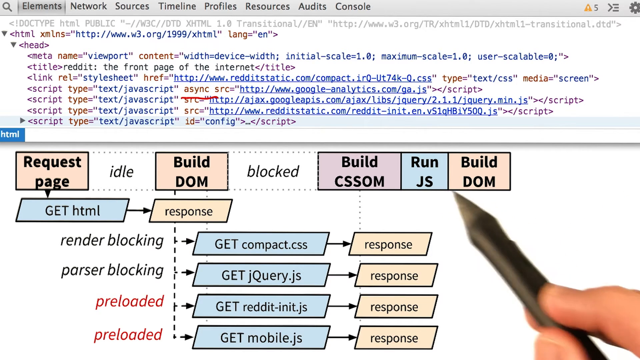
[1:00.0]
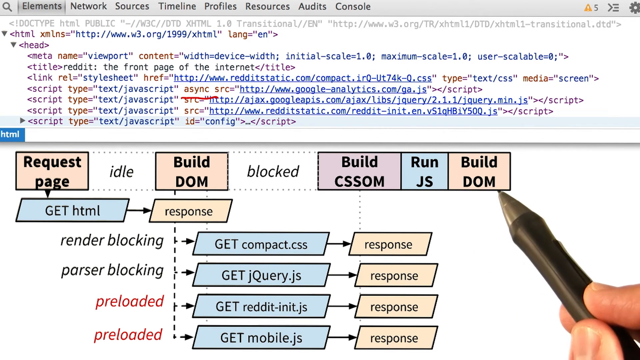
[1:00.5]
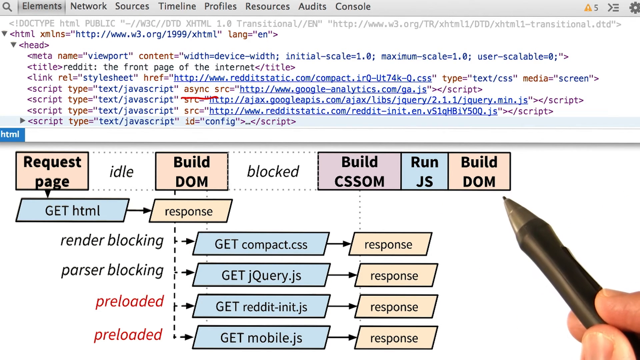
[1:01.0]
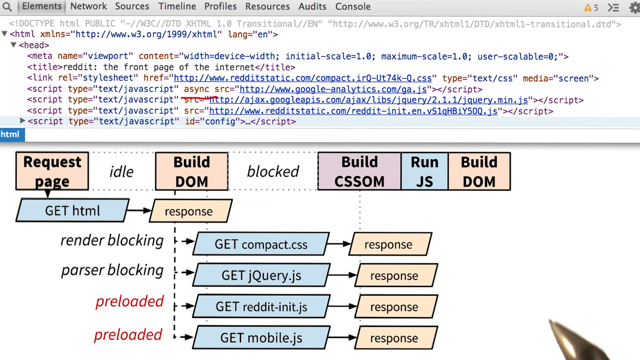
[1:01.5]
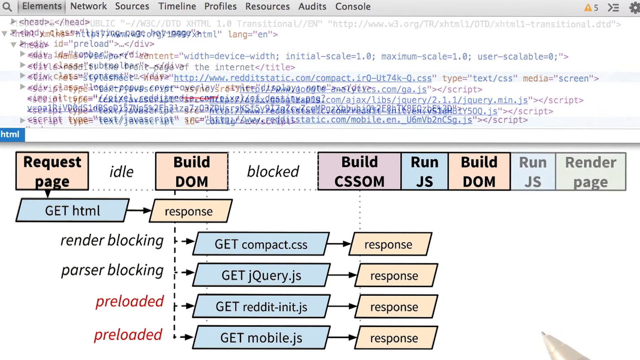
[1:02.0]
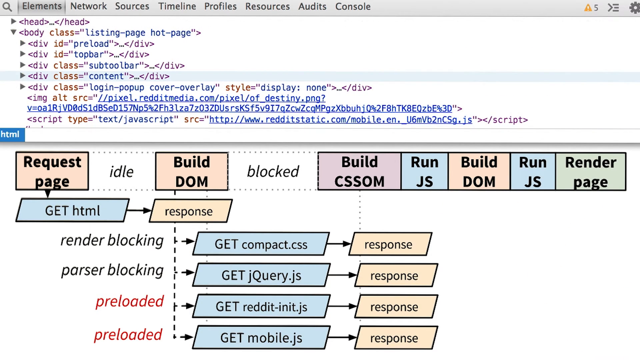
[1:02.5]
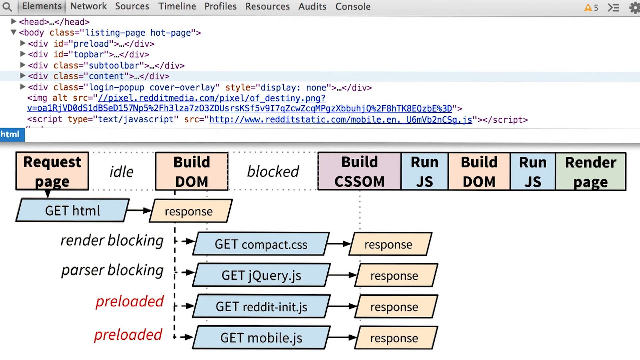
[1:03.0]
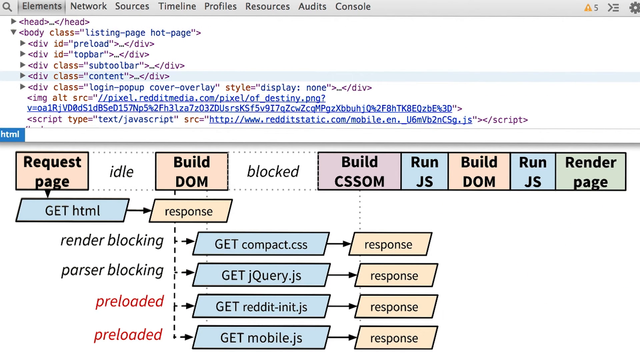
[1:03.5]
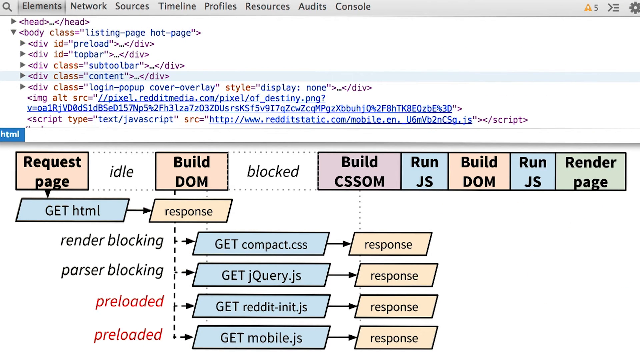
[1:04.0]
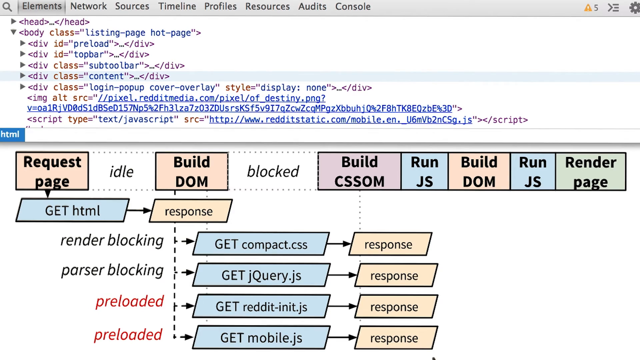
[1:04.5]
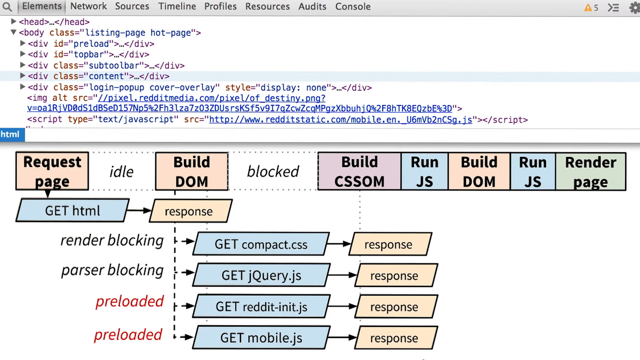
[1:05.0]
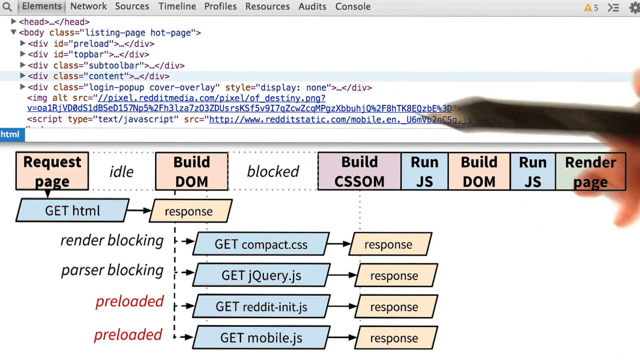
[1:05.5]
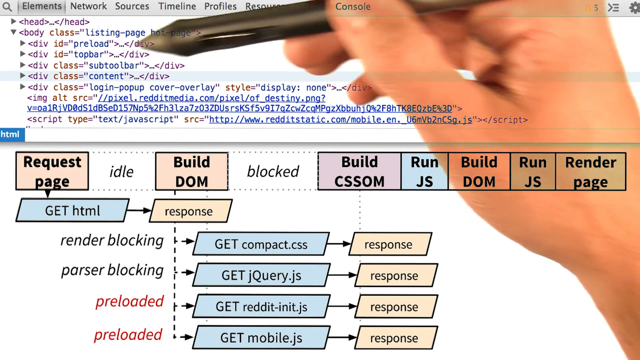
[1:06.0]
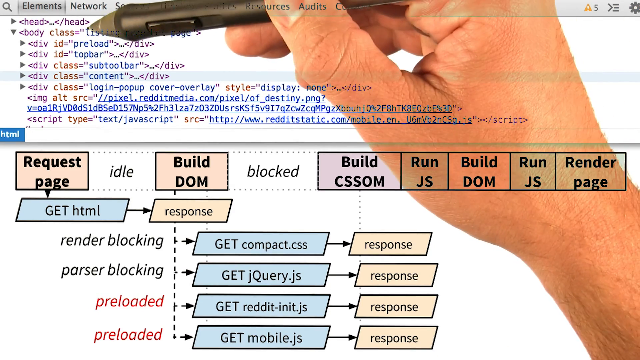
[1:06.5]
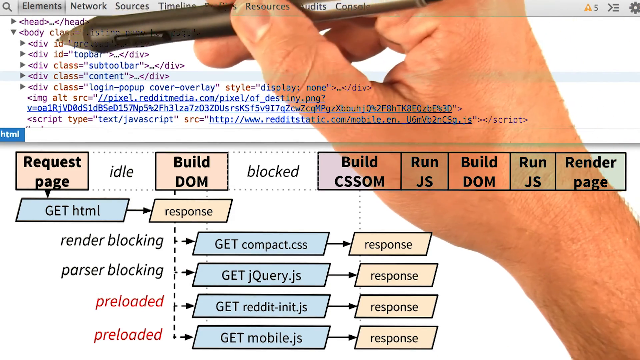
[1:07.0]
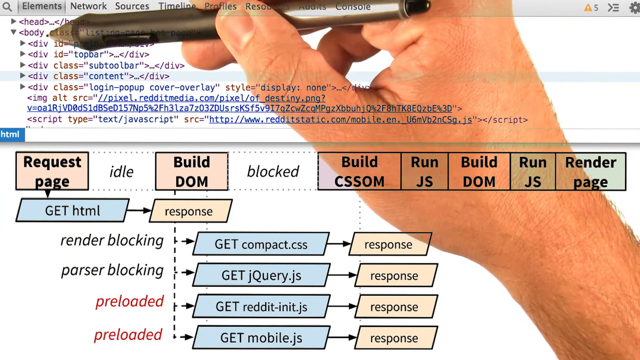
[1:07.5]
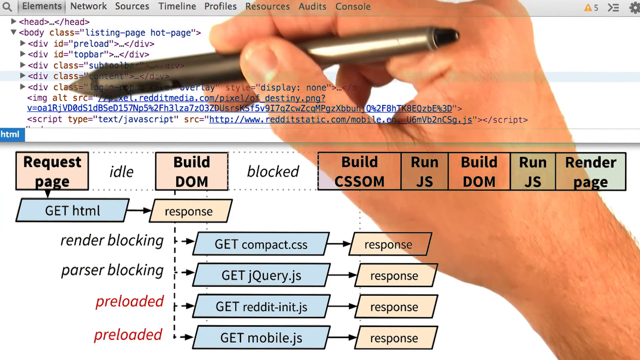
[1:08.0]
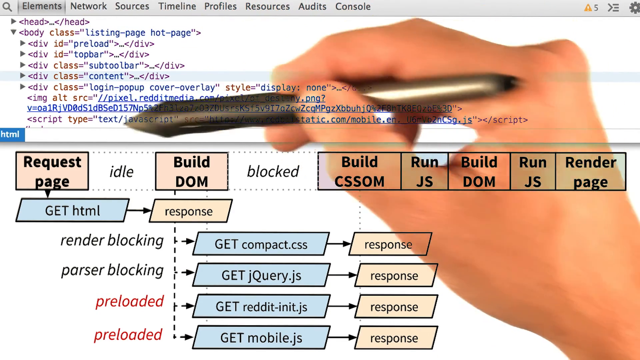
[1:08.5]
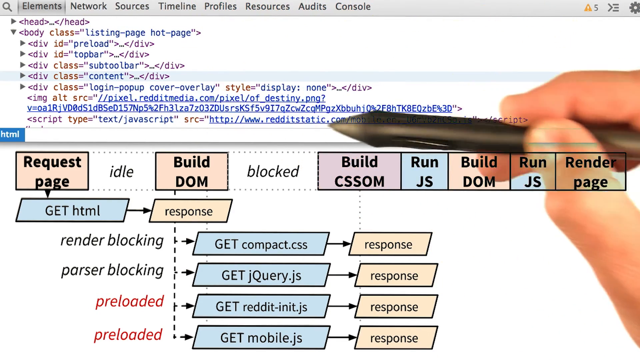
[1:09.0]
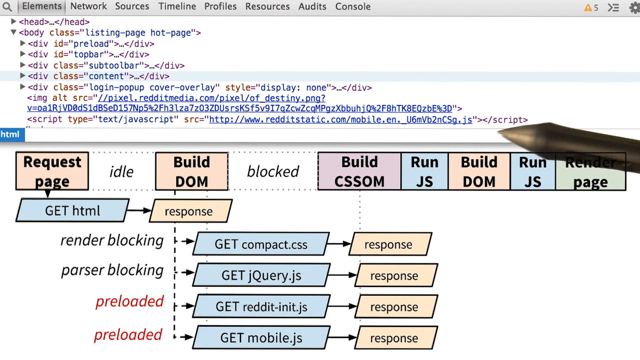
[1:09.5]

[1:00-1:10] The training video appears to be for a coder and shows what appears to be a web page. The top of the page shows code, beginning with the head code and going down to script type code, about six to eight lines. Underneath is a section built to resemble a chart, probably the hierarchy of the code above. At the top is a box, maybe beige or pink, that says "request page"; next to it is "idle", then "build DOM". There are a few more boxes in different colors, and underneath them arrows point to more boxes. Below that are six more color-coded boxes in blues, purples, pinks and other colors, including "render blocking" and "parser blocking".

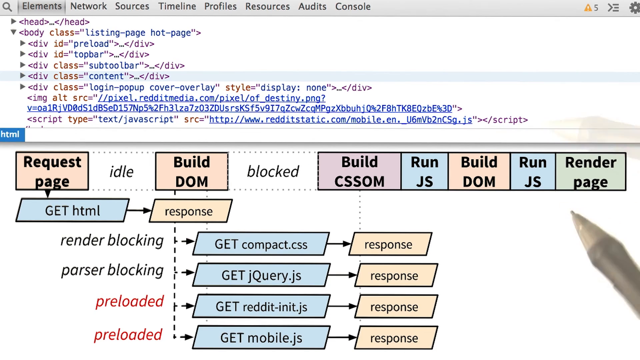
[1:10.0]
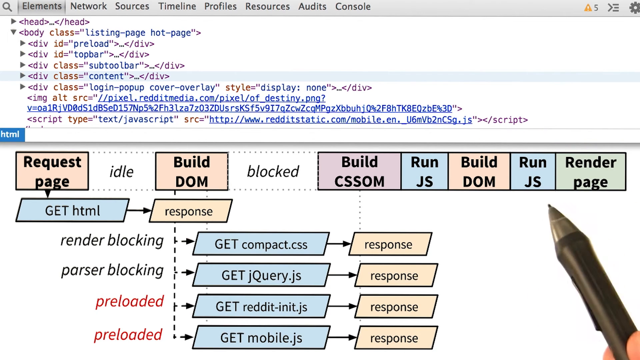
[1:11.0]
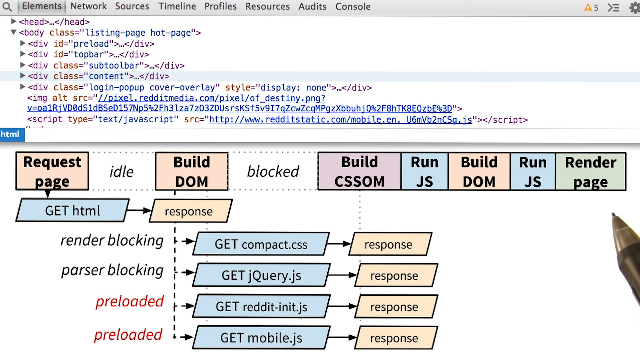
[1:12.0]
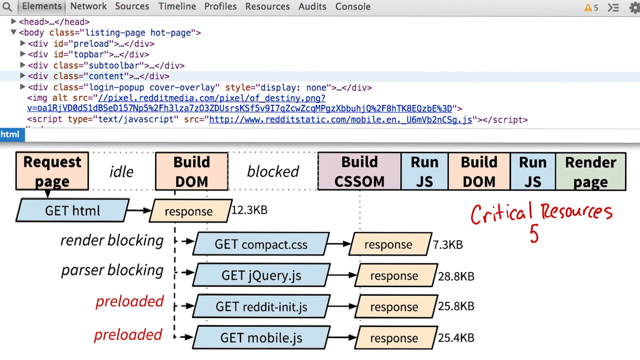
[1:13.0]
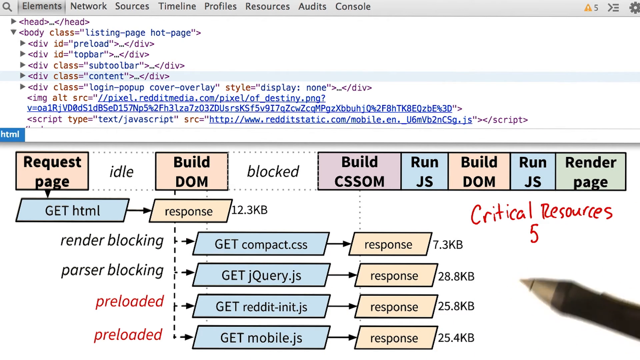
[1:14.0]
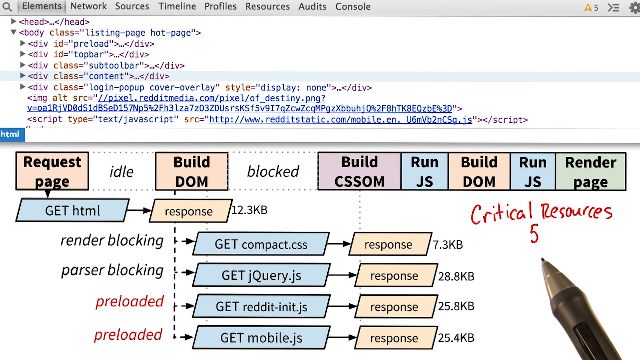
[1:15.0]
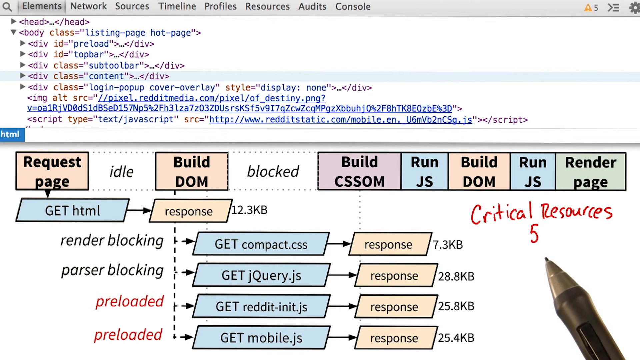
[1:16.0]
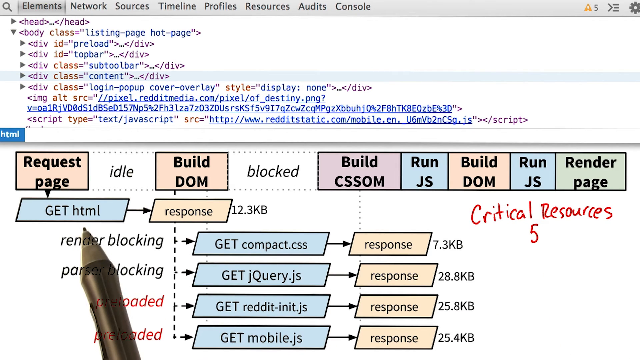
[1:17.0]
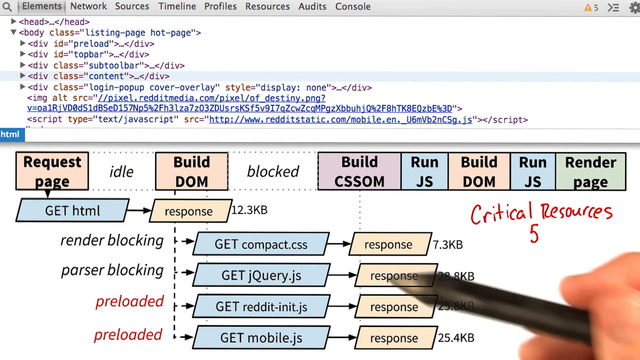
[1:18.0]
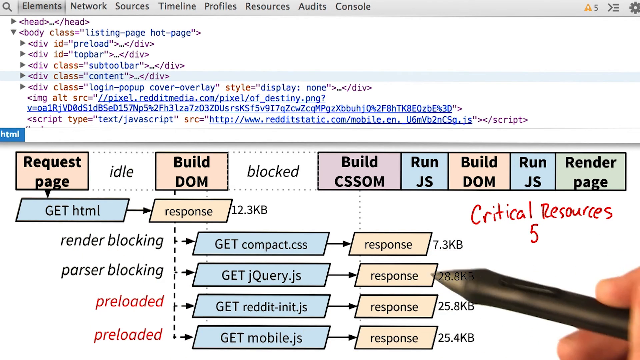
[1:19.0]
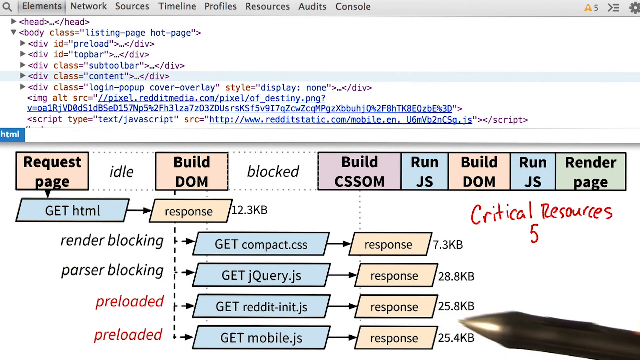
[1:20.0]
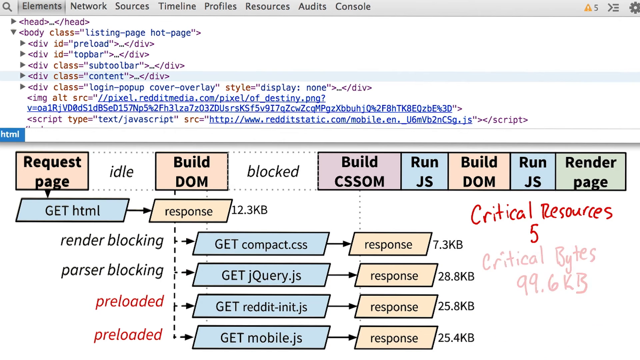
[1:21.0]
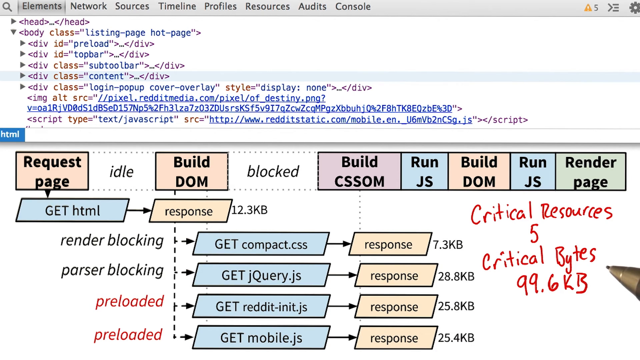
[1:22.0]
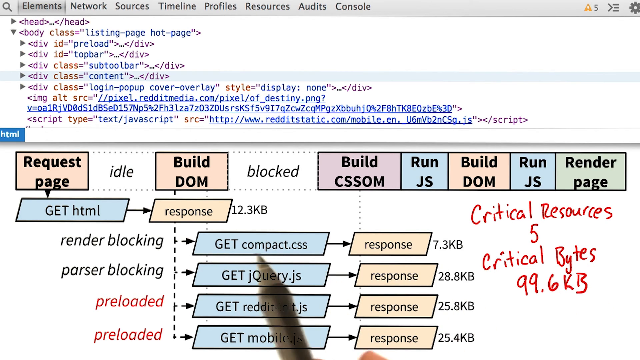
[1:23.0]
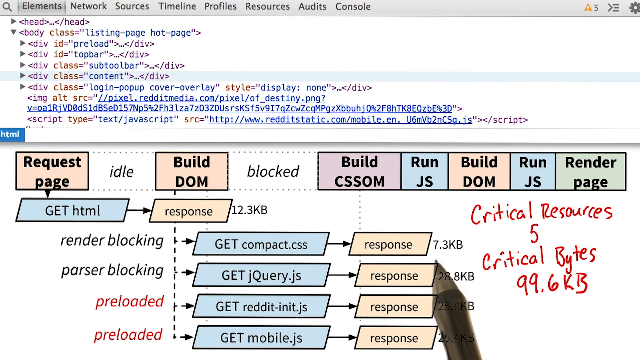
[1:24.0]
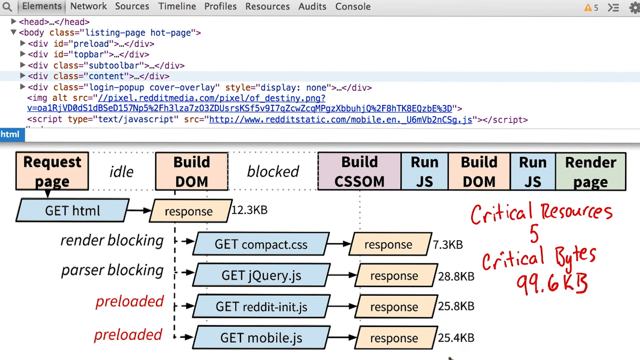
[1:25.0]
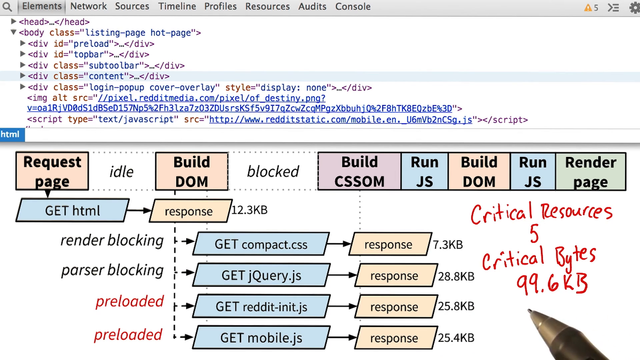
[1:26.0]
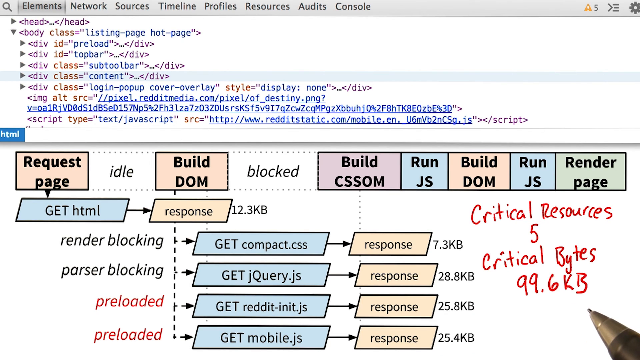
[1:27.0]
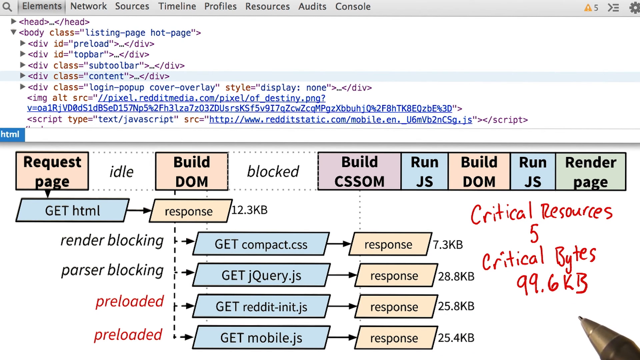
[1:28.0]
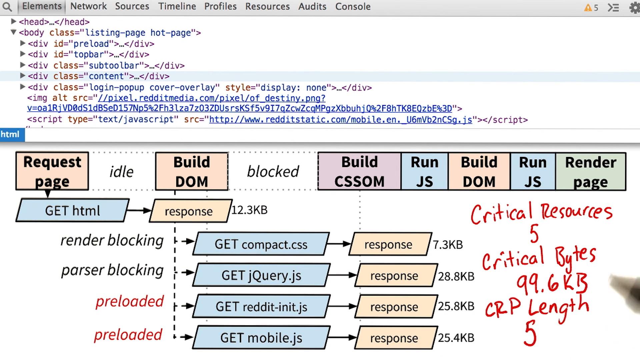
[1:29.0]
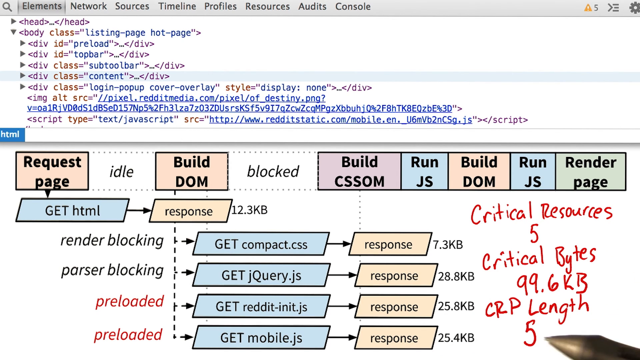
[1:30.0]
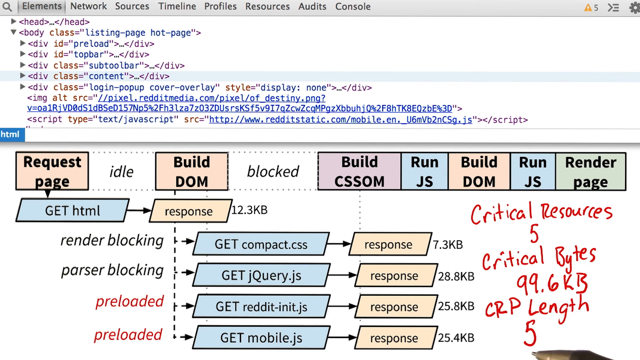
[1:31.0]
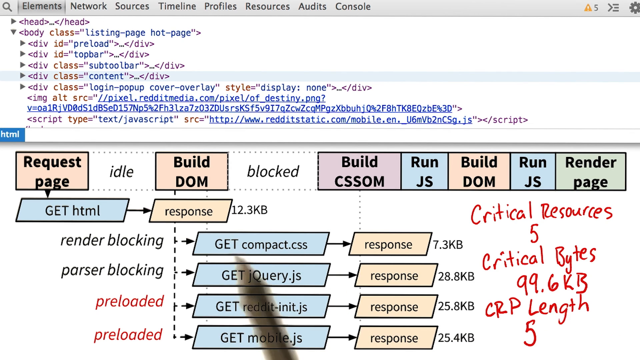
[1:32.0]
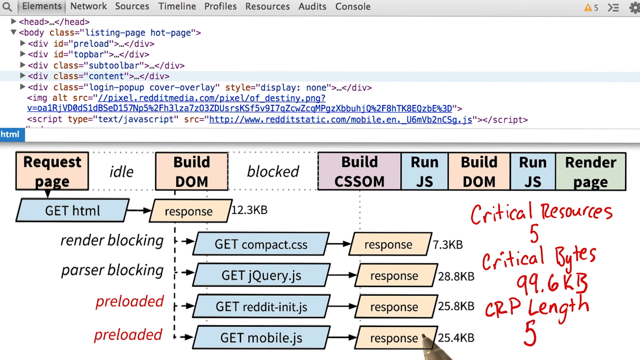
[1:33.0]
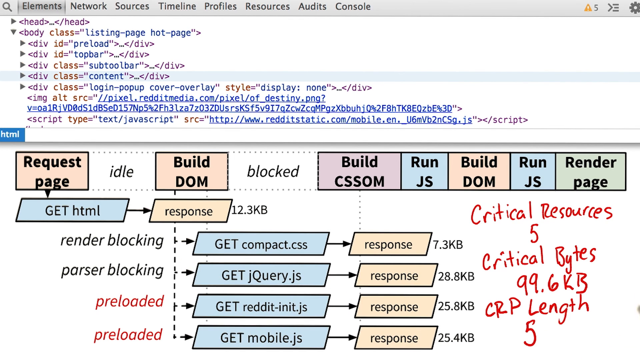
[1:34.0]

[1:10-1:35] The training video for code shows the code of a web page rather than the page itself. Menu selections at the top refer to different types of code: "Elements" is currently shown, and next to it are menu boxes for "Networks", "Sources", "Timeline", "Profiles", "Resources", "Audits" and "Console". Underneath is a chart showing the hierarchy of the page, possibly a template in chart form. About six or seven boxes at the top hold the more basic requests or actions, such as "Request page" and "Build DOM". Under some of them, arrows point to other boxes; under "Request page" an arrow points to "Get HTML". This continues for a few seconds. Someone has written with a pen, in red, "Critical Resources 5" and, also in red, "Critical Bytes, 99.6" kilobytes (KB). This continues until the end of the video.